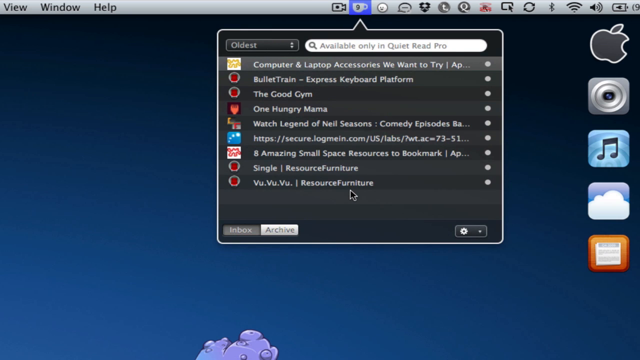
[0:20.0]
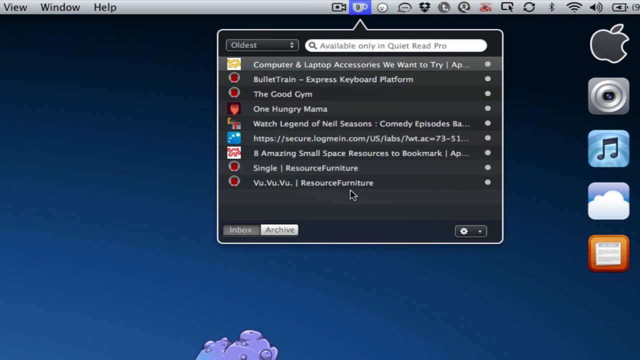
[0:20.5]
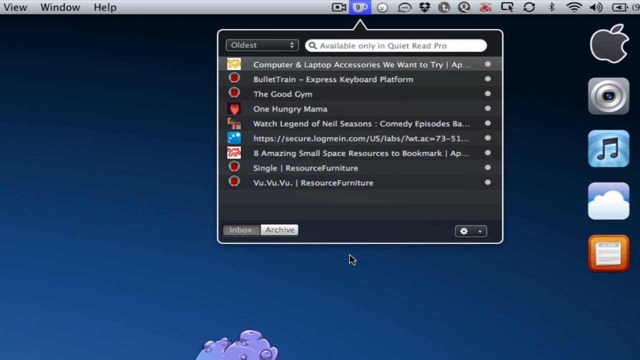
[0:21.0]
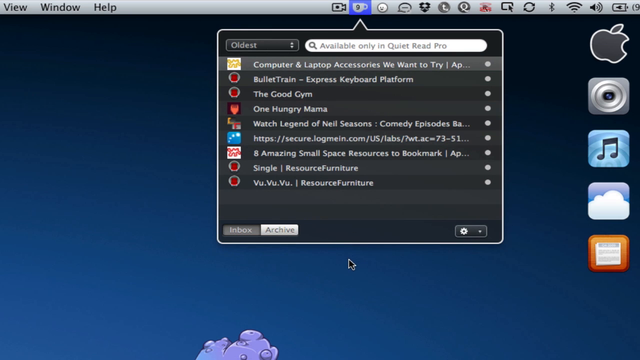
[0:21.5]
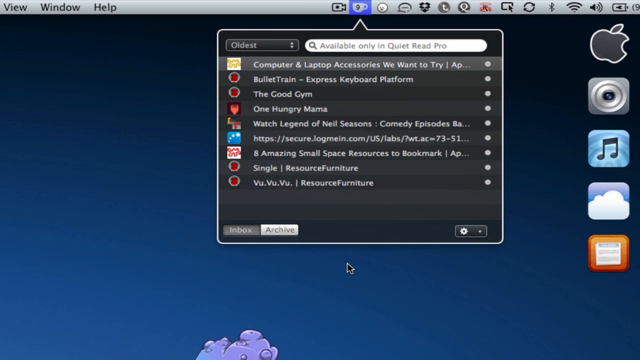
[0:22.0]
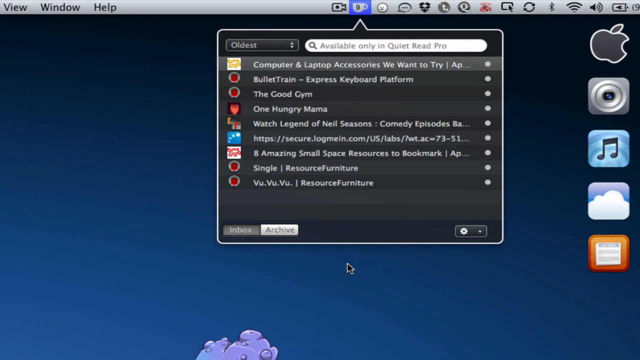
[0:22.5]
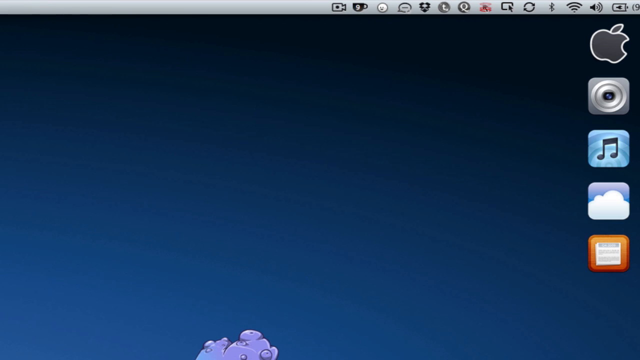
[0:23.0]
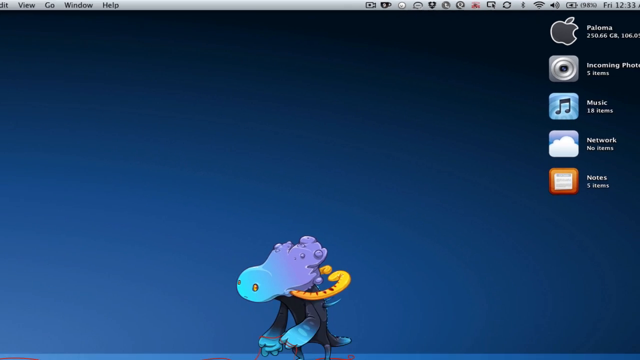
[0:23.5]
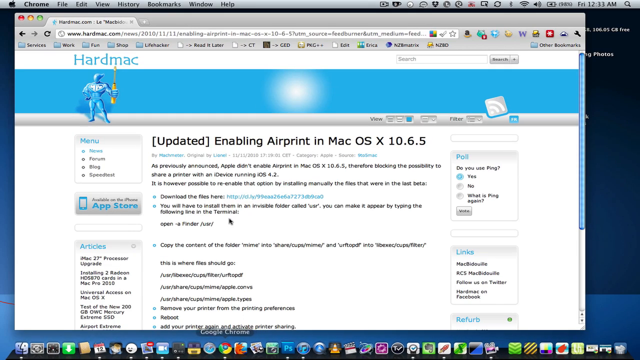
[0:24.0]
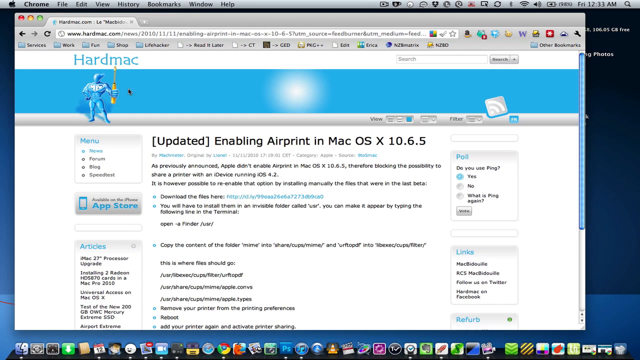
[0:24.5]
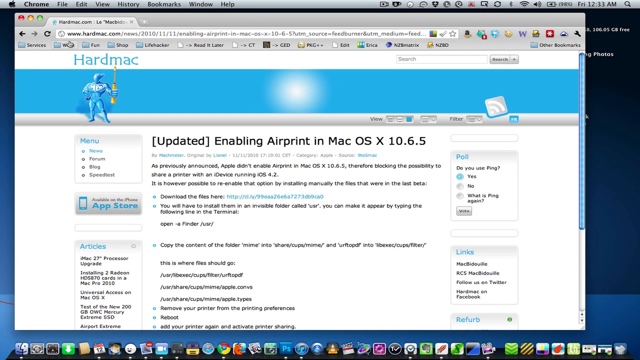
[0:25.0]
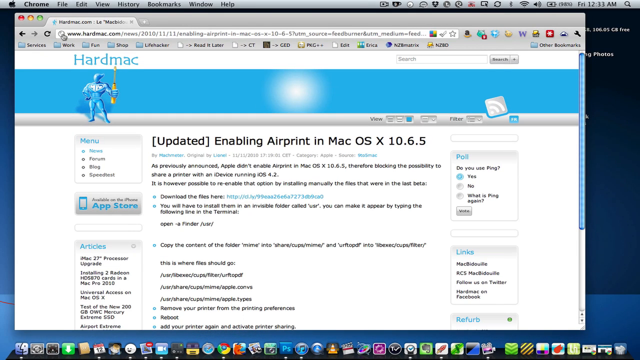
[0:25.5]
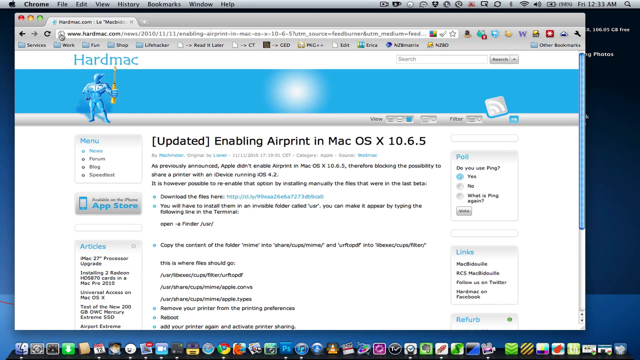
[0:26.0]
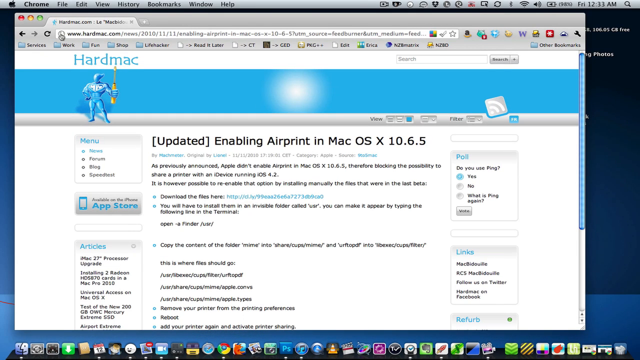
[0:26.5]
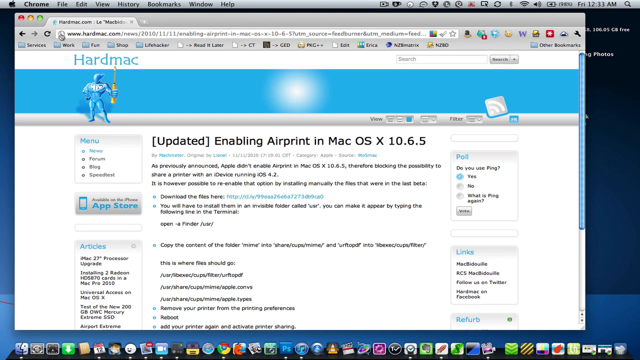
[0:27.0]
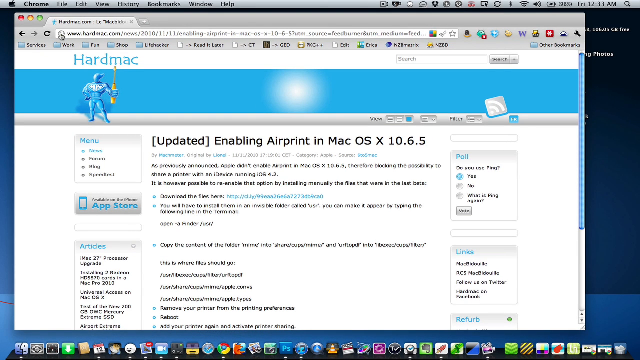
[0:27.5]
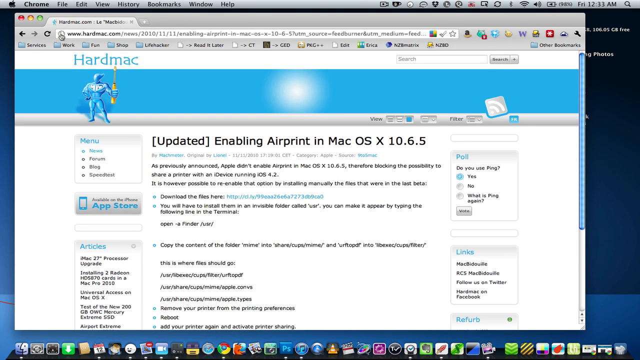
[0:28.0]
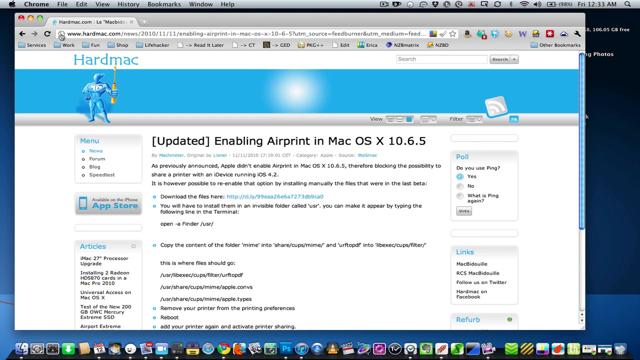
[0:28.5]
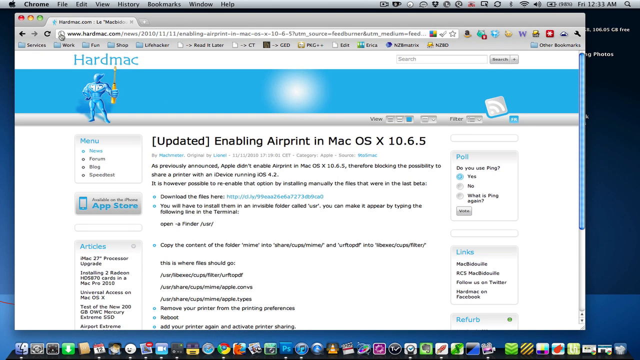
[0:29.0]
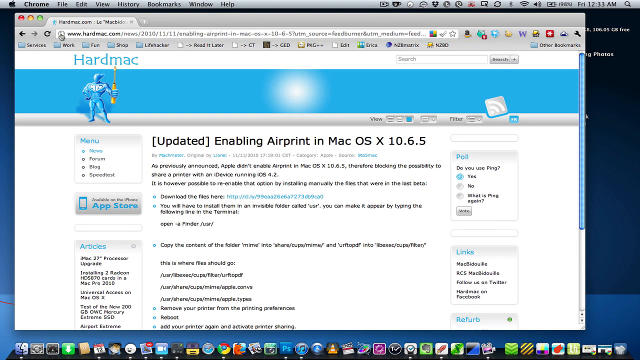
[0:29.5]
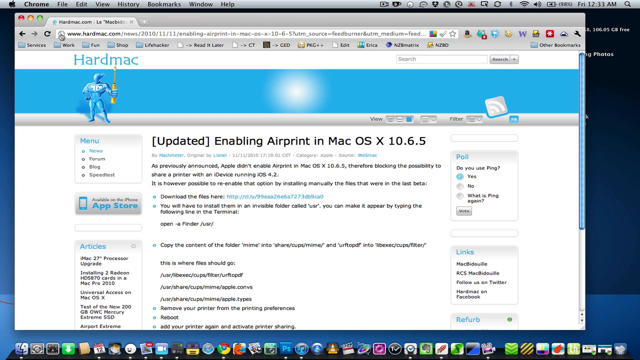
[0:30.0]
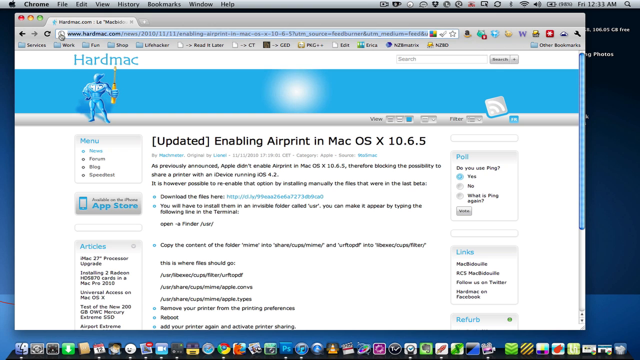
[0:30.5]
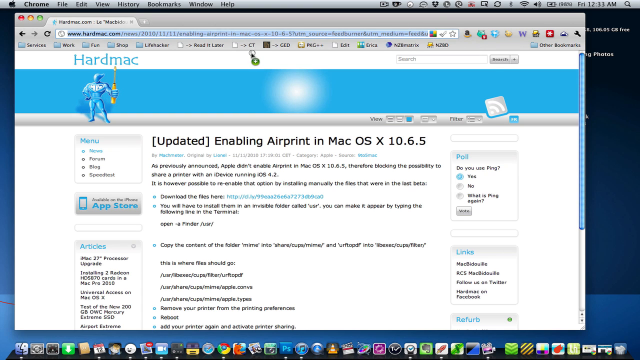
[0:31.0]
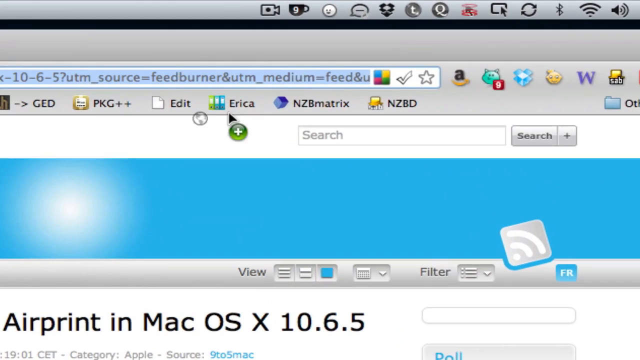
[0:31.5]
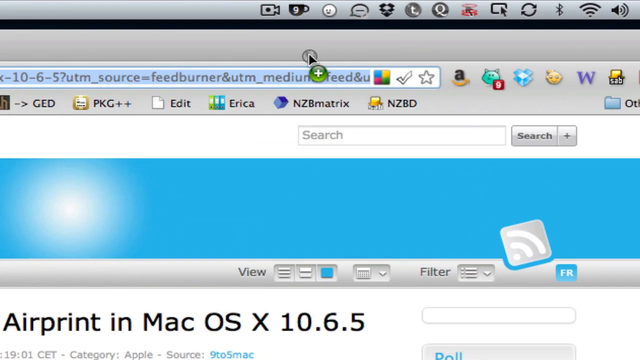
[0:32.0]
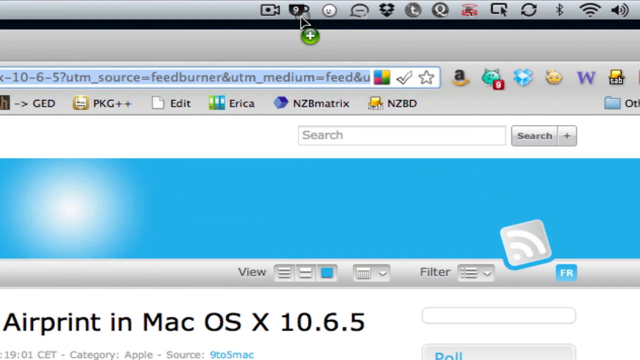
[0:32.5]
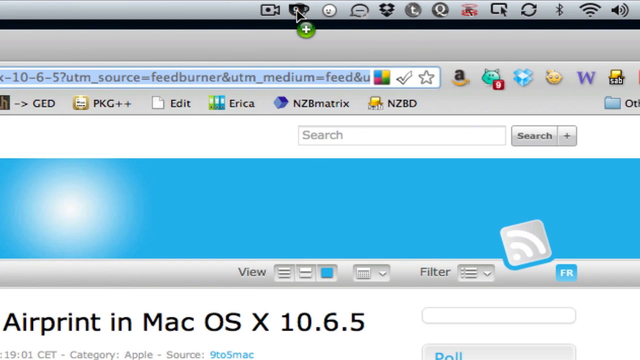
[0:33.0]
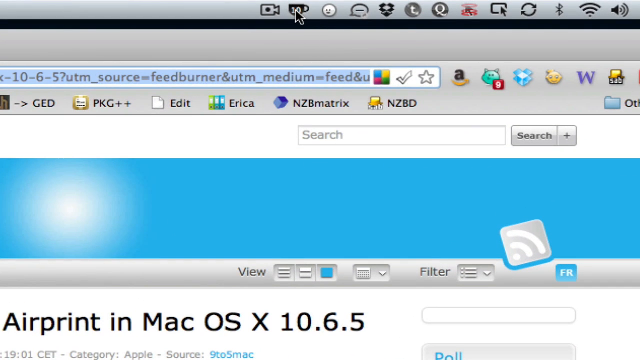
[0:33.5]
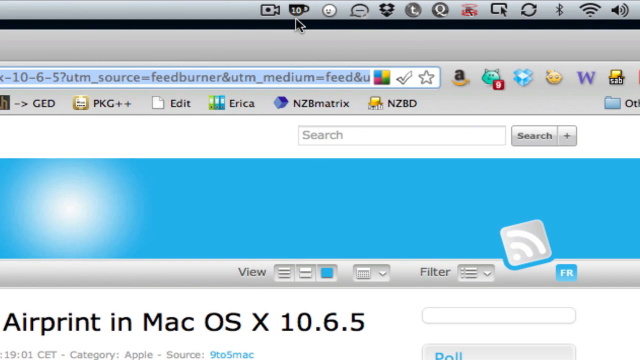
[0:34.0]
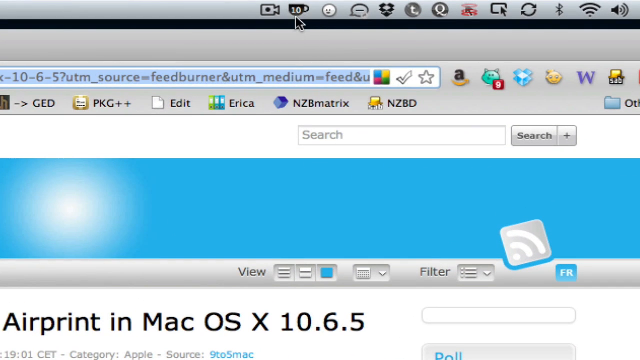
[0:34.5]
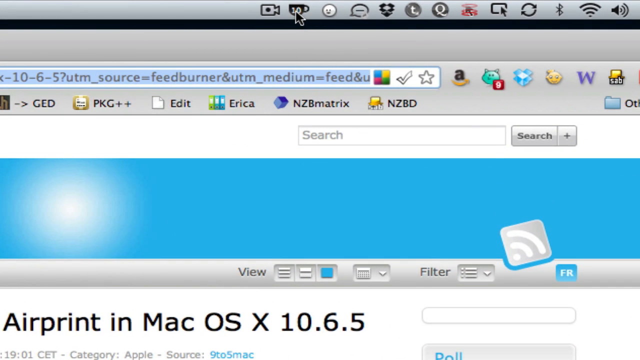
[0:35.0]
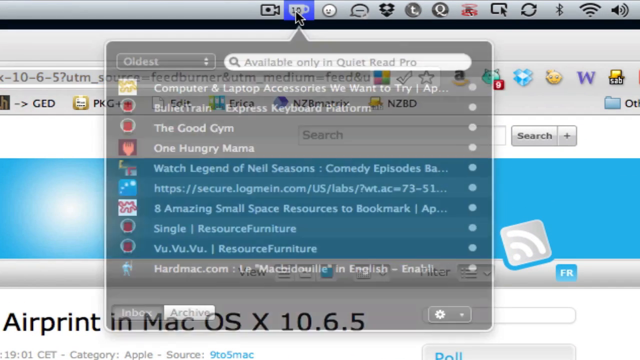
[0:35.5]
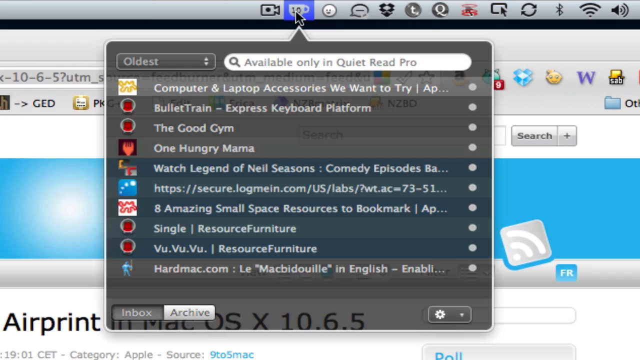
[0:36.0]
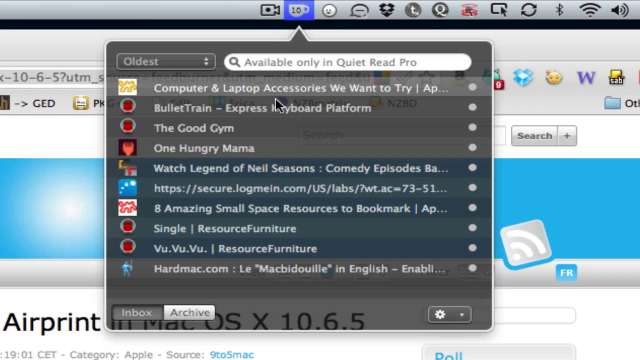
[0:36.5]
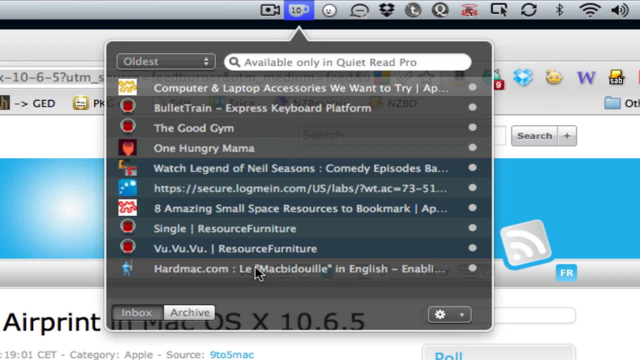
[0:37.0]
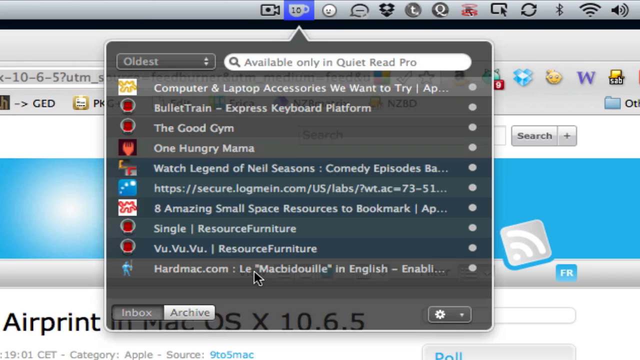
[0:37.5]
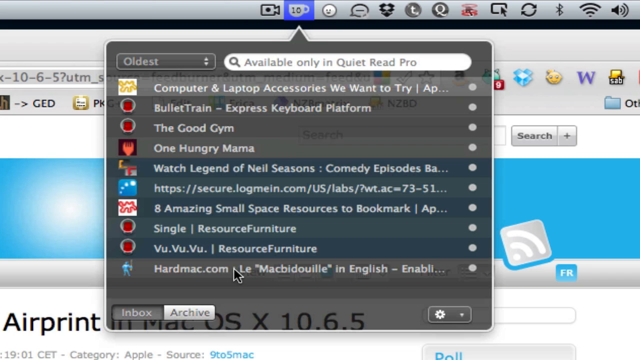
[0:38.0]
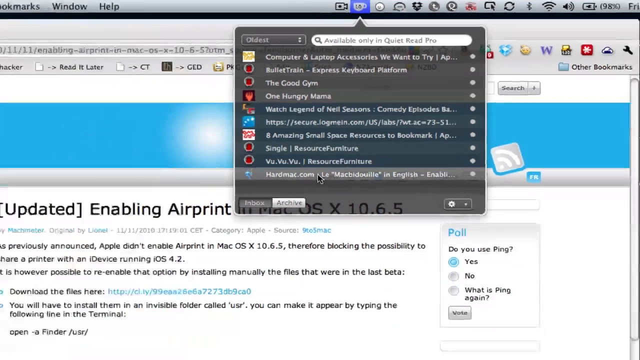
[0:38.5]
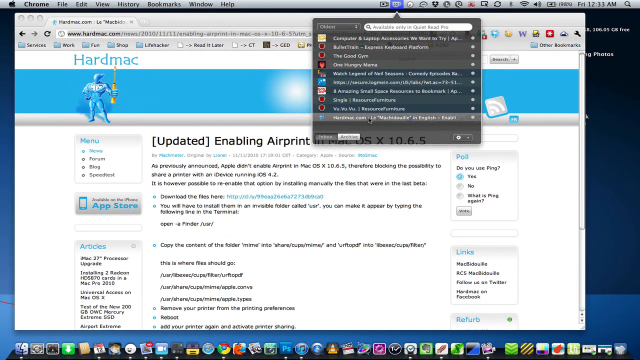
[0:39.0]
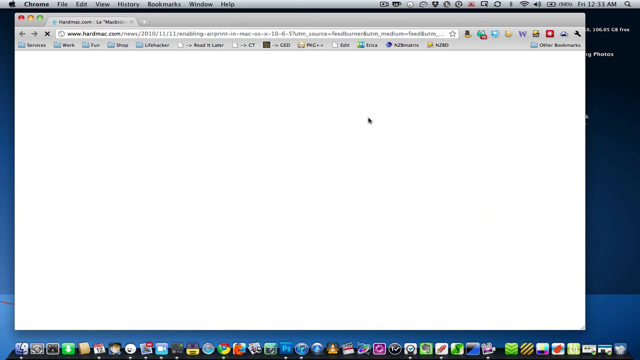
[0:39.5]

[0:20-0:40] On the computer screen, the pointer clicks on Resource Furniture. A screen for hard Mac comes up. The pointer goes to the coffee cup, then back to hard Mac, then back to the cup again. It moves up to the taskbar area and up to the cup, which has 10 things listed in it, and then goes to hard Mac.